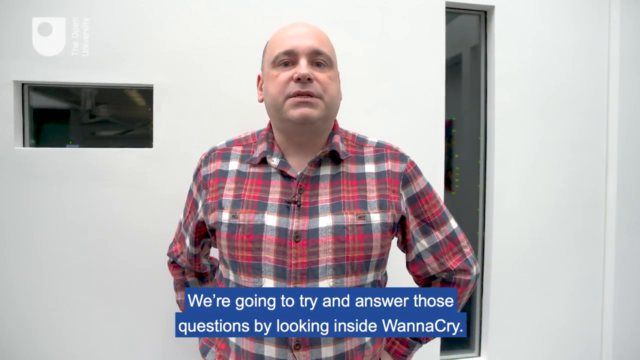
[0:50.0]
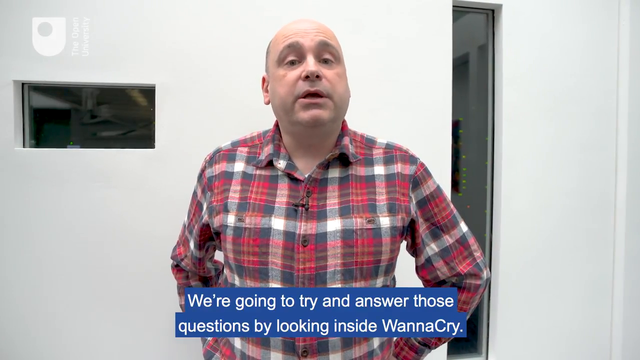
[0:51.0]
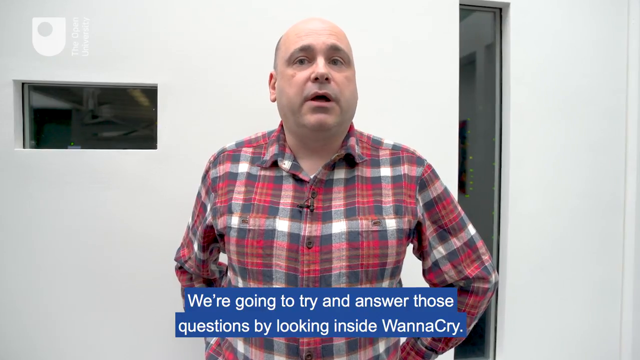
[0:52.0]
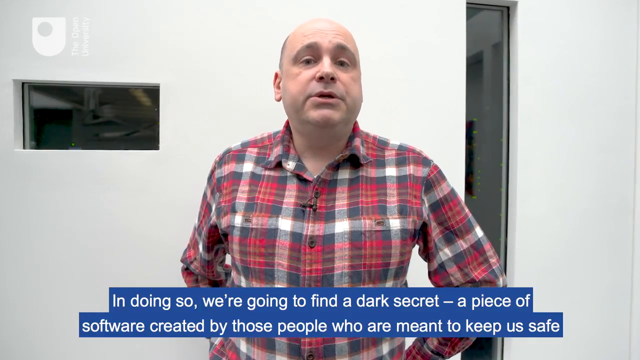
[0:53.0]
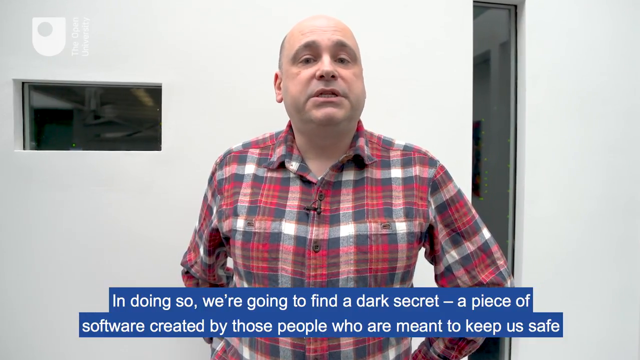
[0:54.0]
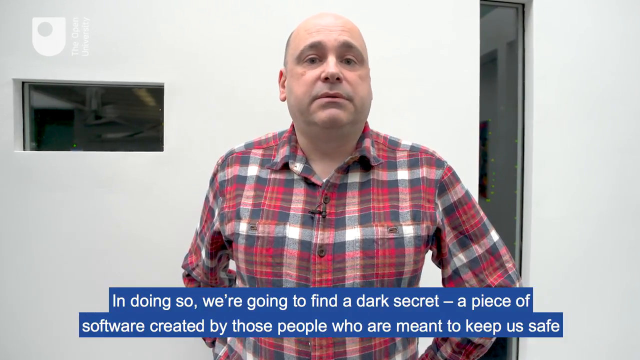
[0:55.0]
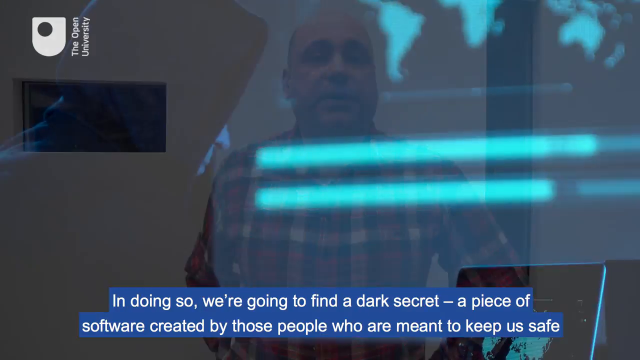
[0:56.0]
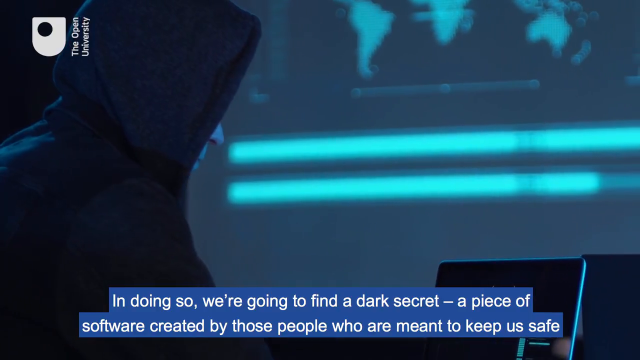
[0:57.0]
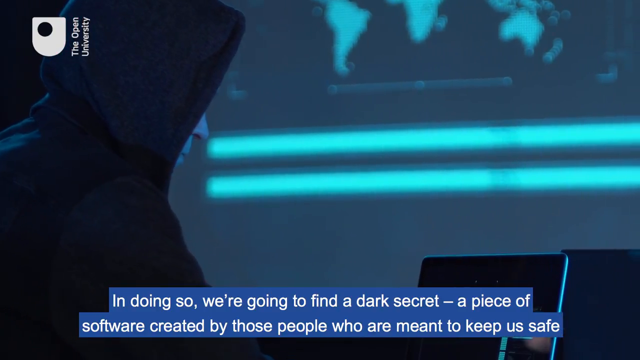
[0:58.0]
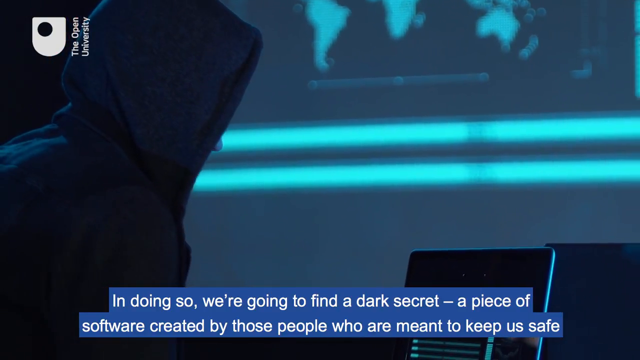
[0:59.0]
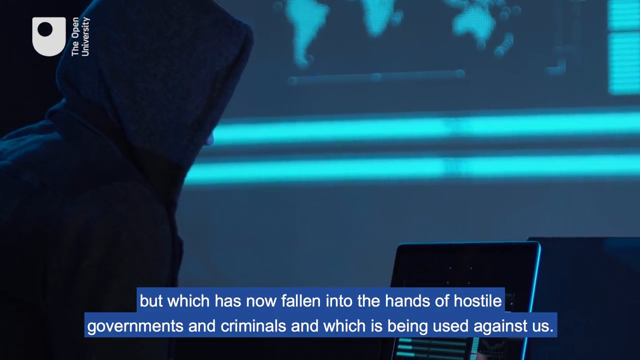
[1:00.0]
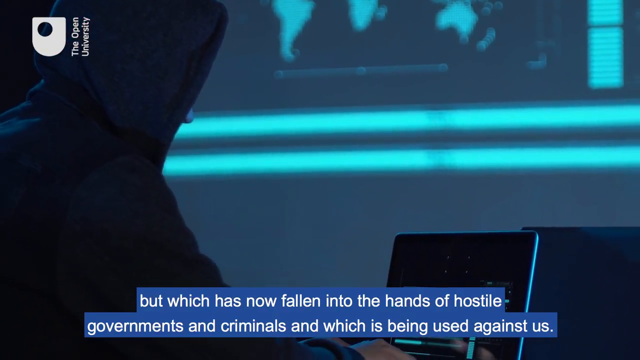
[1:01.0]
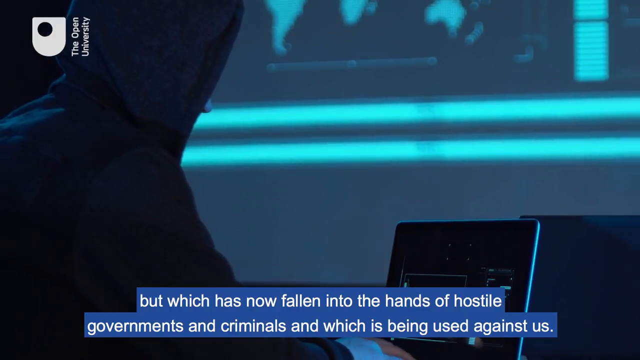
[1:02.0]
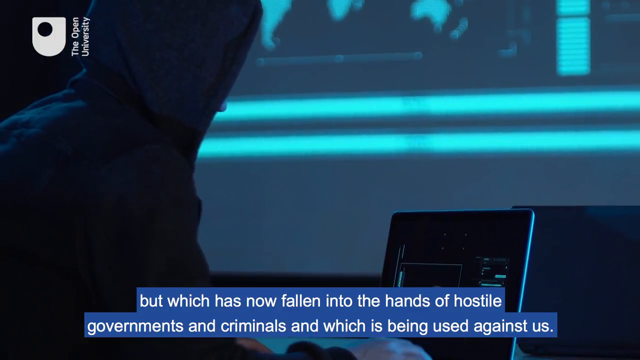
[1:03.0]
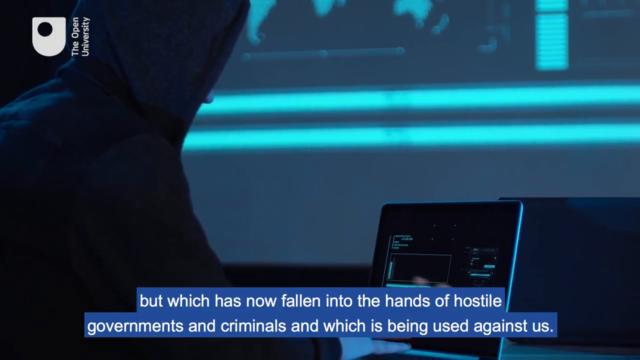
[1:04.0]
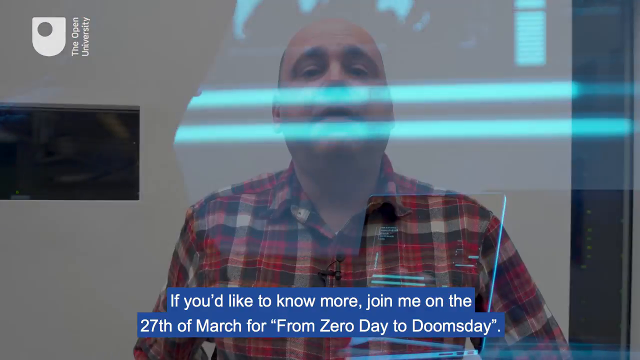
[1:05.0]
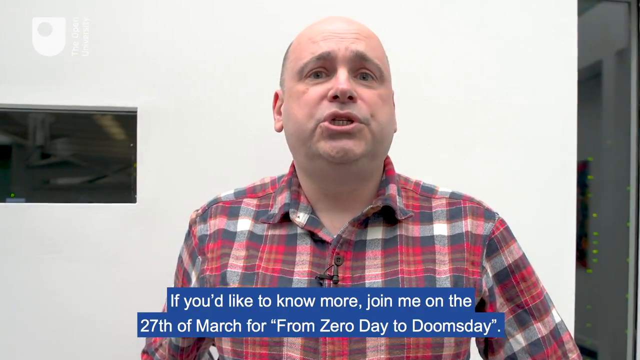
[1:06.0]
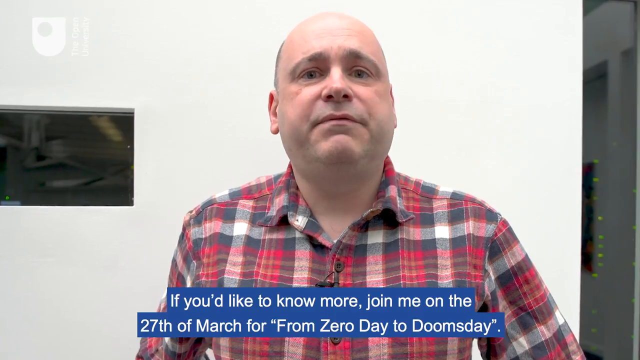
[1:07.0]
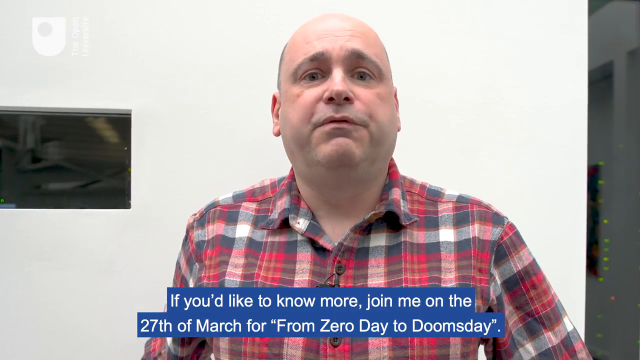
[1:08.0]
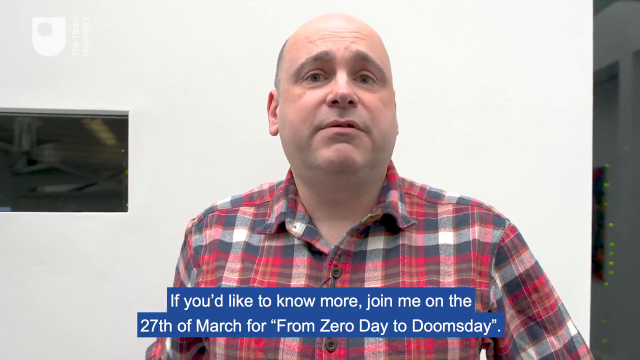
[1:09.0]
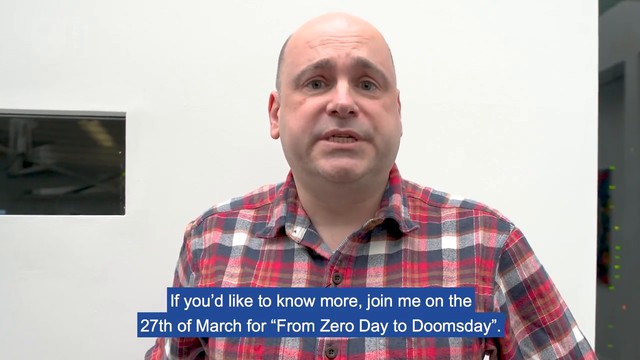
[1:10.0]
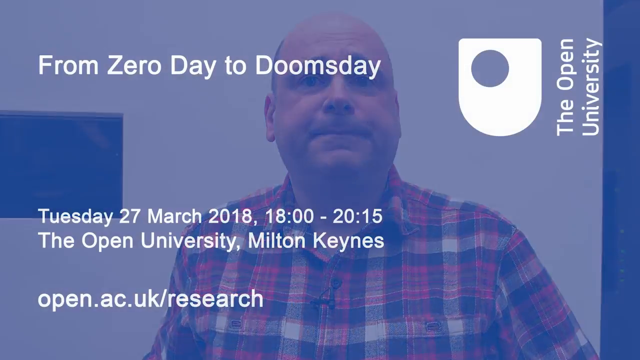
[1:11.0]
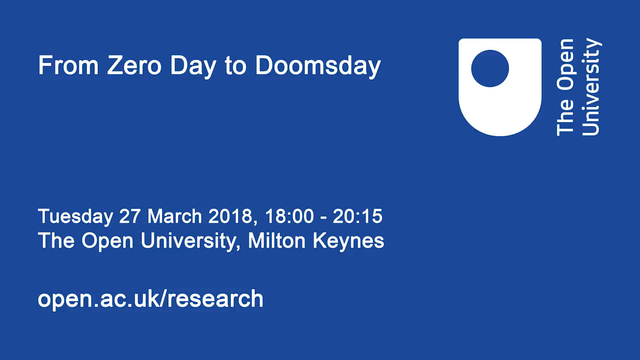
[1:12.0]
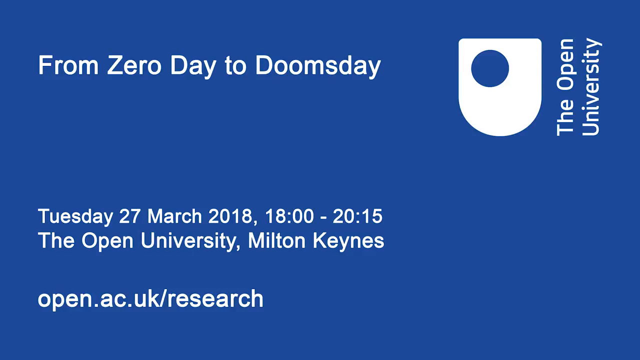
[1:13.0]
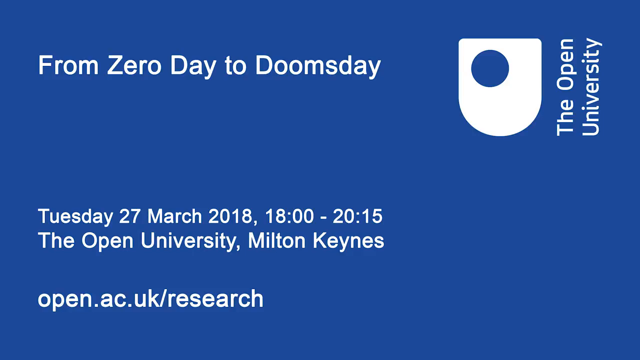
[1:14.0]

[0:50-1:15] Mike Richards continues talking to the camera with a subtitle beneath reading "We're going to try and answer those questions by looking inside WannaCry." It then reads "in doing so we're going to find a dark secret, a piece of software created by those who are meant to keep us safe." A scene transition cuts to a man who appears to be some form of hacker, wearing a hoodie and typing on a laptop. A new subtitle reads "which has now fallen into the hands of hostile governments and criminals and which is being used against us." Then a subtitle reads "If you'd like to know more, join me on the 27th of March for From Zero Day to Doomsday." The Open University logo appears with a subtitle in white text on a blue background reading "from zero day to doomsday," along with the date, the year 2018 and the times "18:00 to 20:15," and text reading "the Open University Milton Keynes" and "open.ac.uk/research."